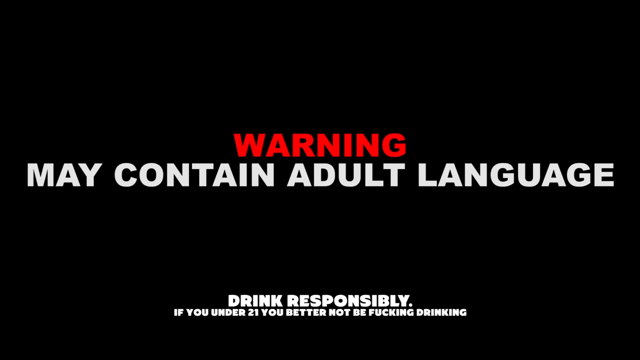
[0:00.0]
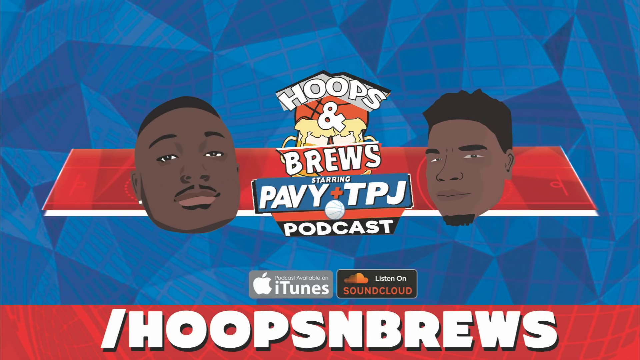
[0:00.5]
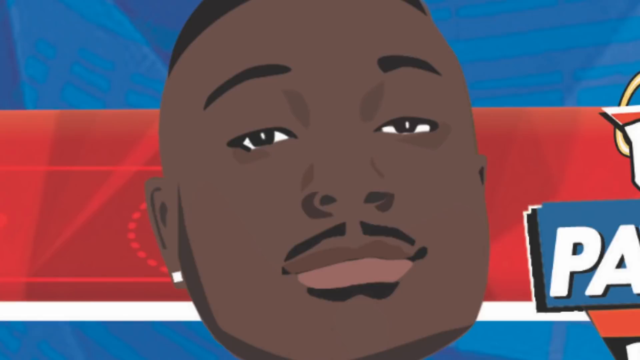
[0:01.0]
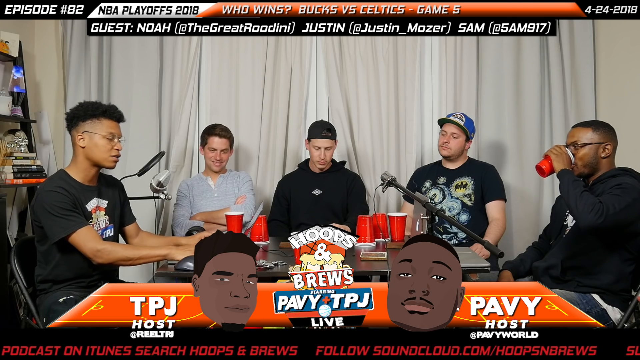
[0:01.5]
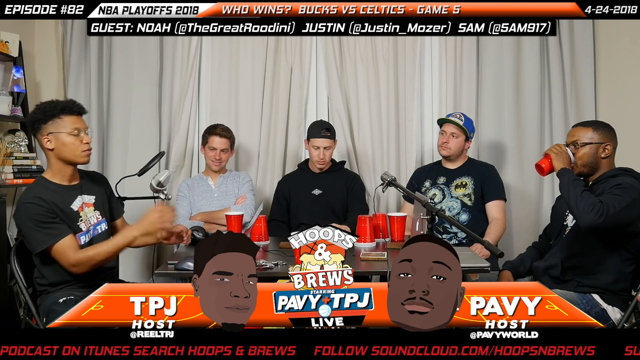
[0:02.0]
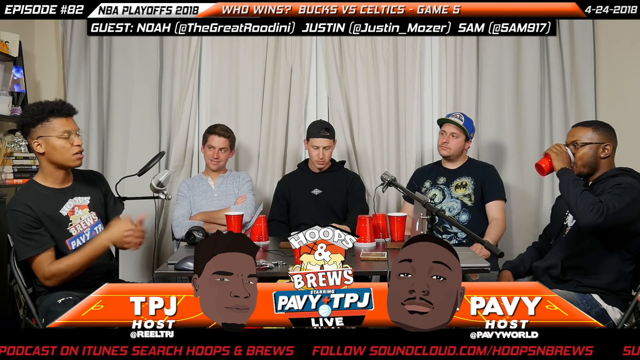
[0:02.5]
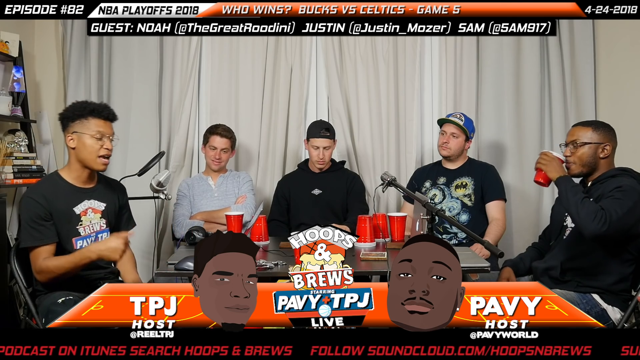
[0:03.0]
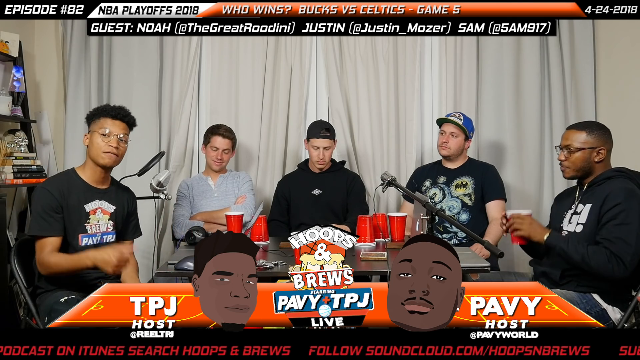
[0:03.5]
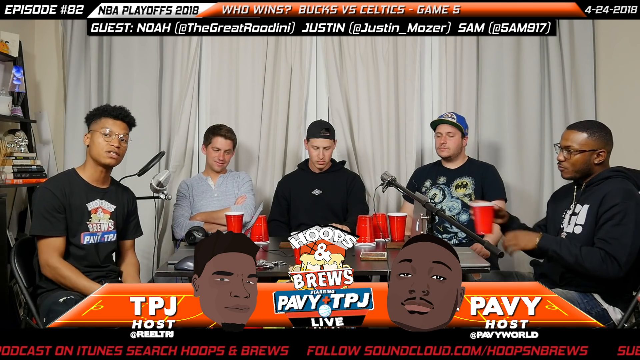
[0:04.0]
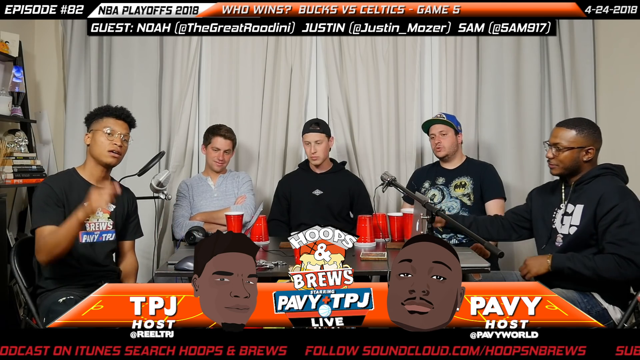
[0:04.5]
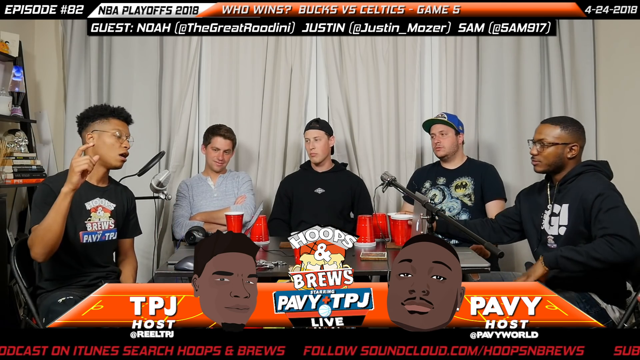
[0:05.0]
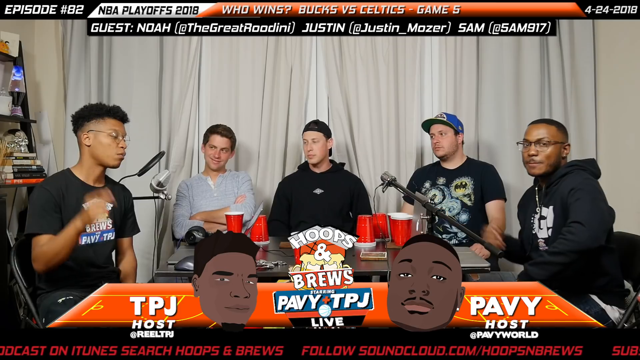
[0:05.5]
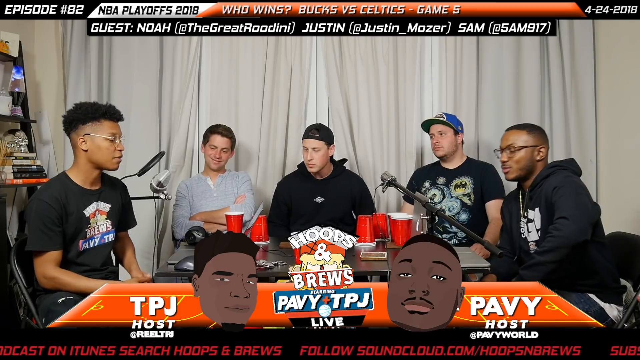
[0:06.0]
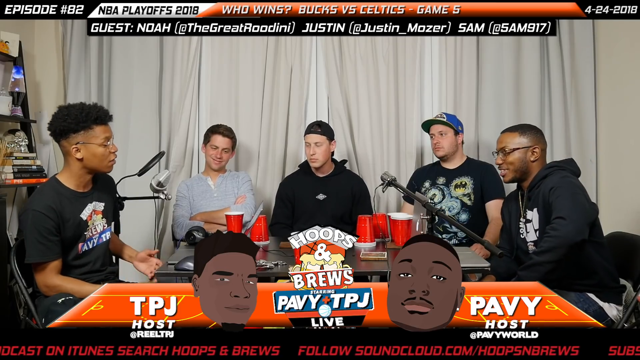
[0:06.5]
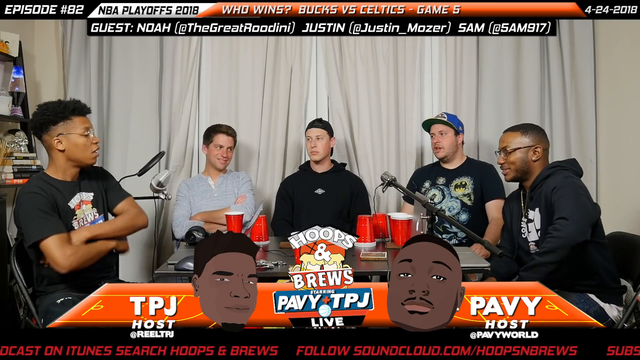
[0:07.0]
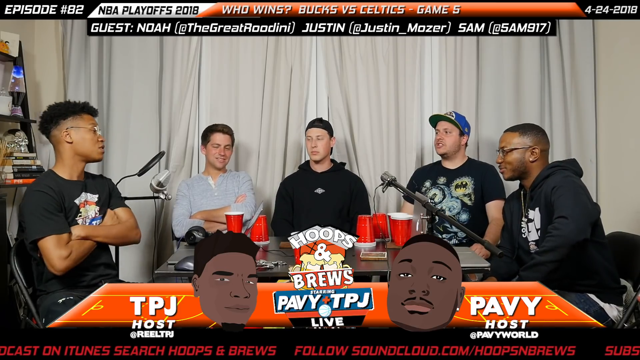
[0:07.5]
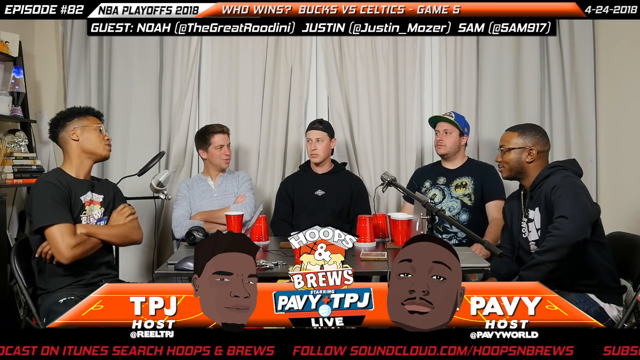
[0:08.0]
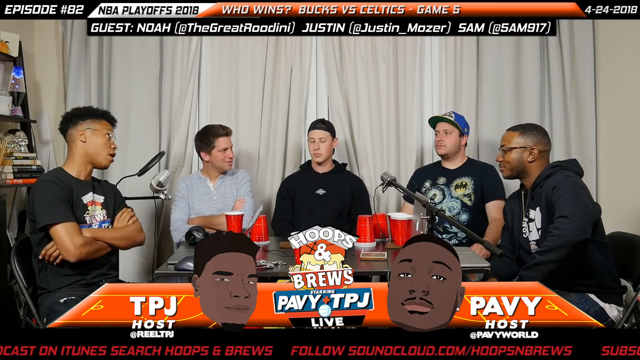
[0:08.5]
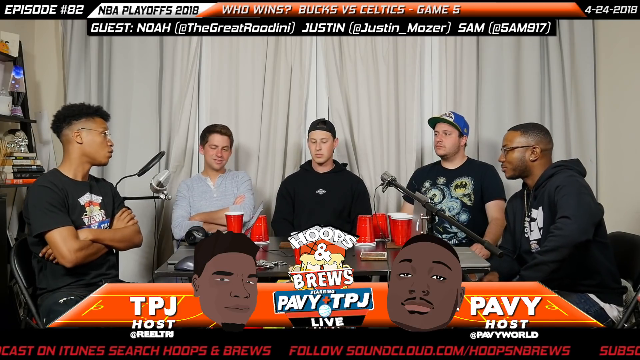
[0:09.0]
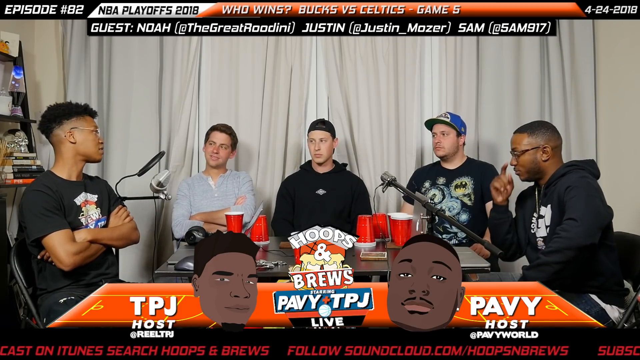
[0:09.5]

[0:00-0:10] On-screen text reads "warning may contain adult language," with "warning" in red and "may contain adult language" in white, along with "drink responsibly." Five people are in the area, each with a red cup in front of them. The podcast is called Hoops and Brews.